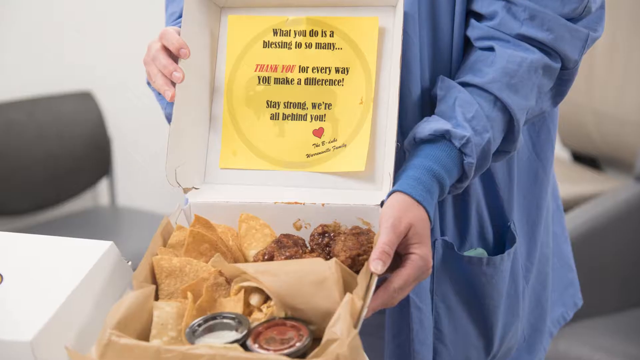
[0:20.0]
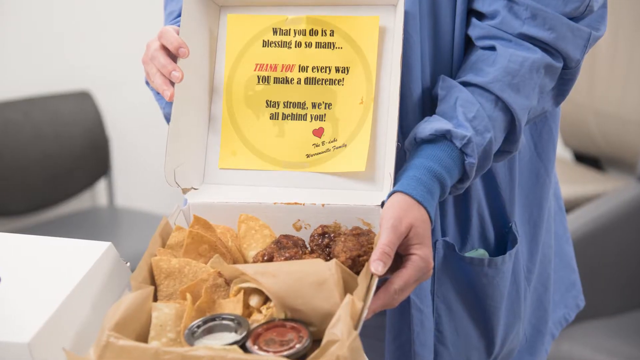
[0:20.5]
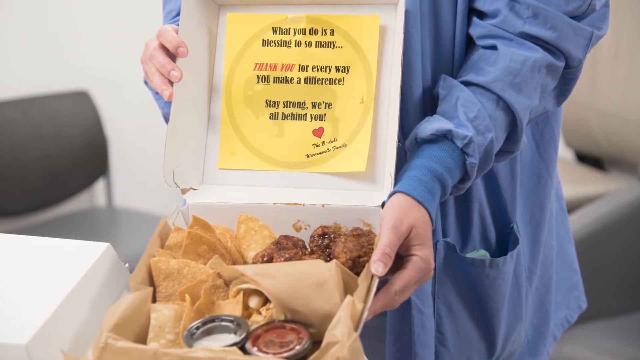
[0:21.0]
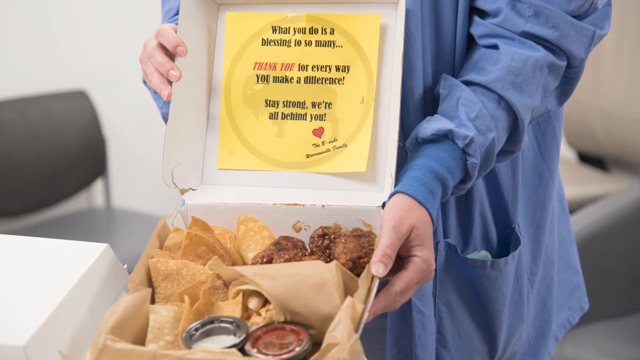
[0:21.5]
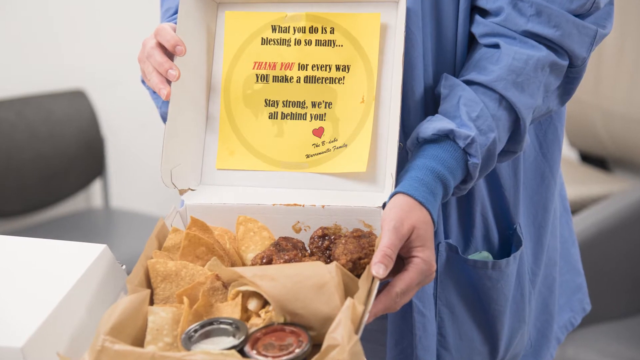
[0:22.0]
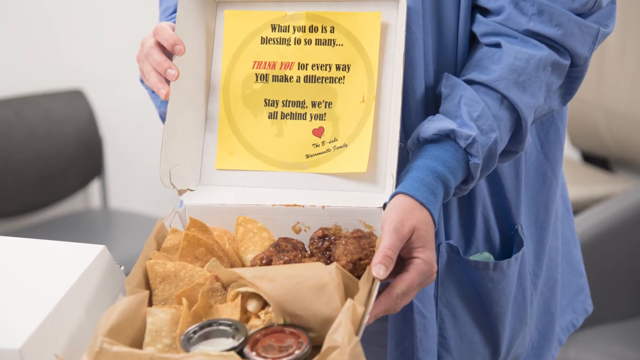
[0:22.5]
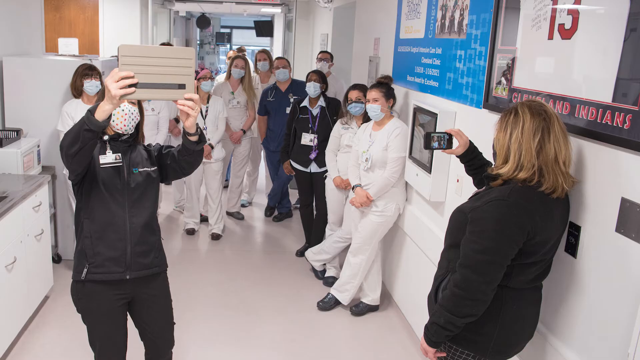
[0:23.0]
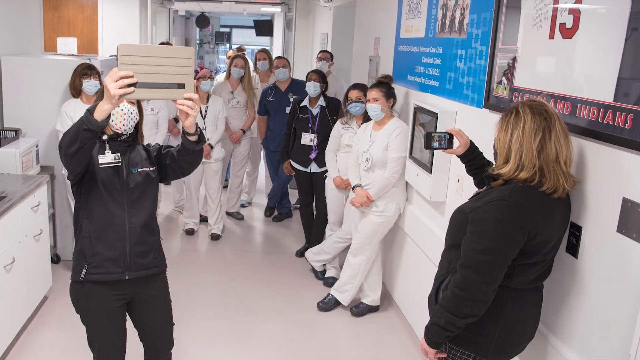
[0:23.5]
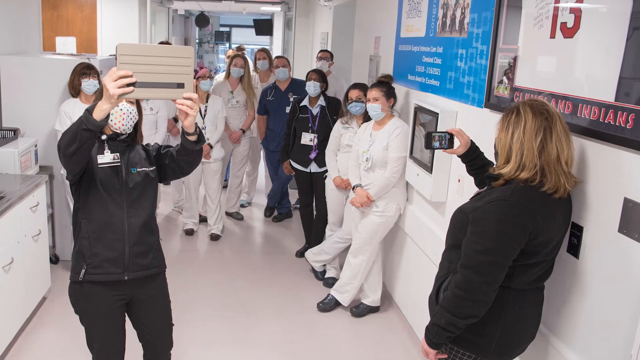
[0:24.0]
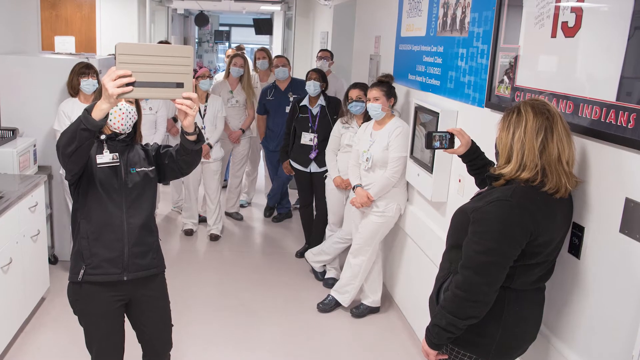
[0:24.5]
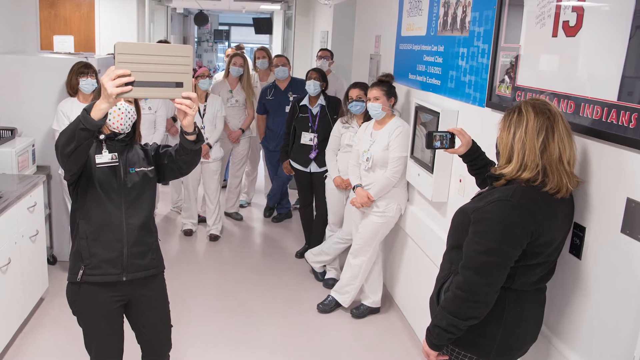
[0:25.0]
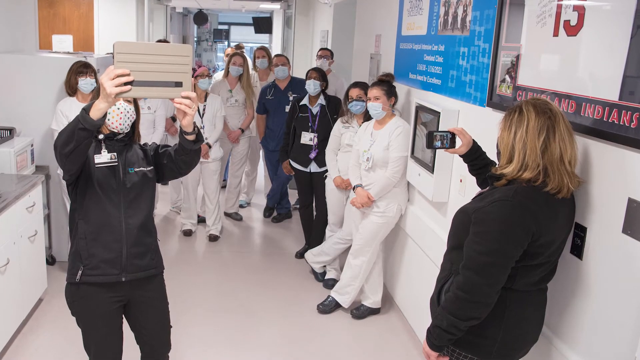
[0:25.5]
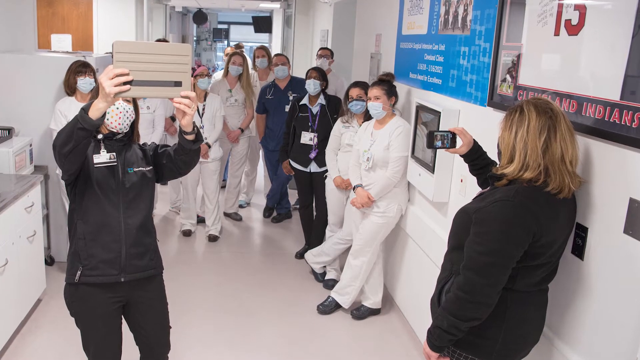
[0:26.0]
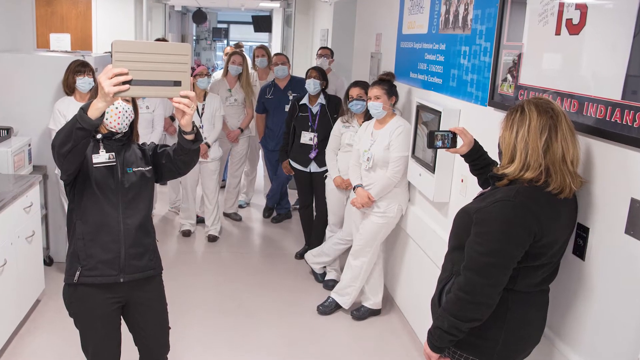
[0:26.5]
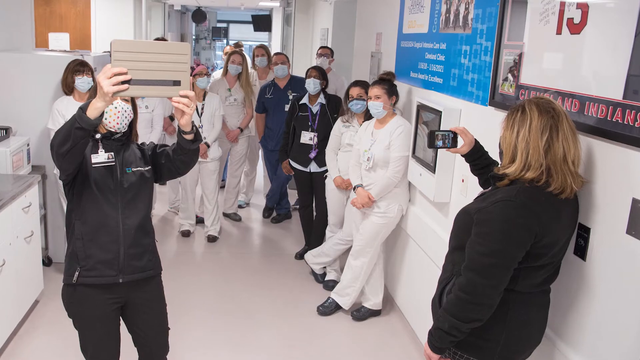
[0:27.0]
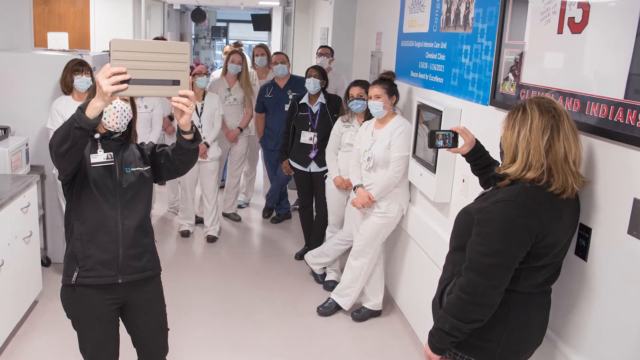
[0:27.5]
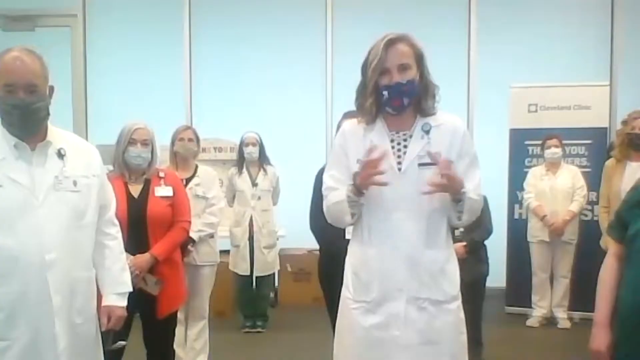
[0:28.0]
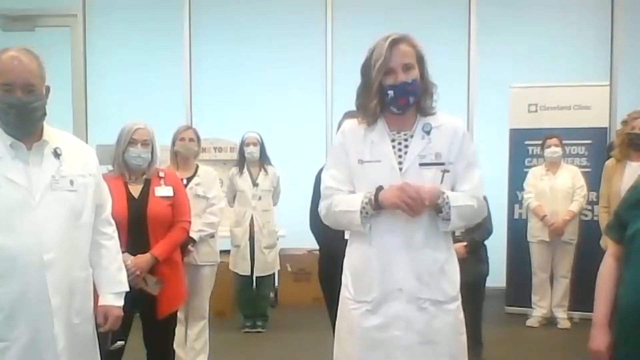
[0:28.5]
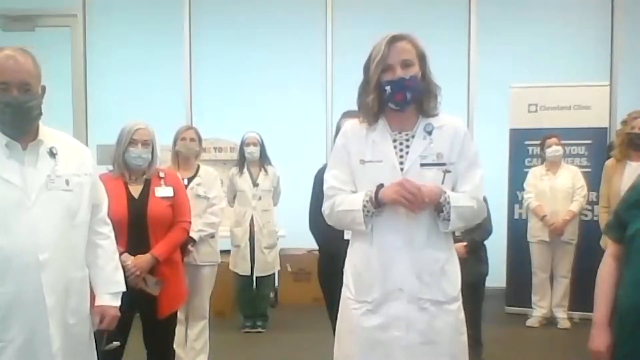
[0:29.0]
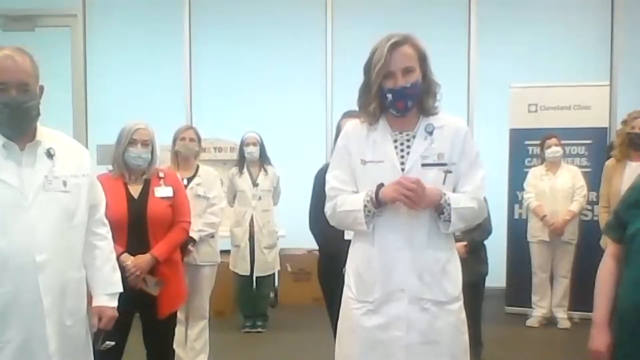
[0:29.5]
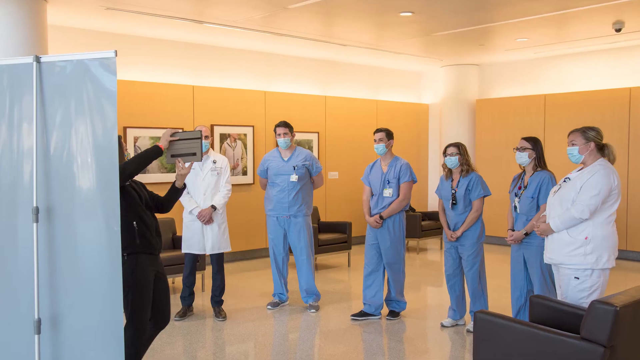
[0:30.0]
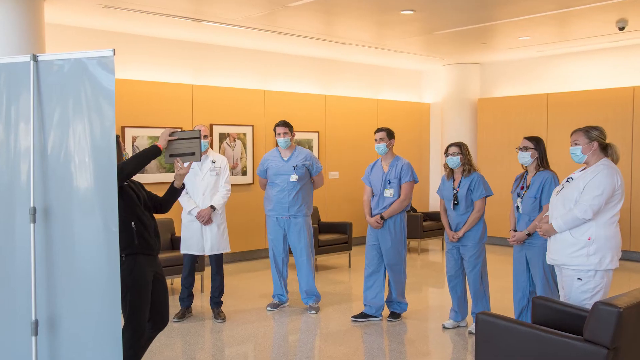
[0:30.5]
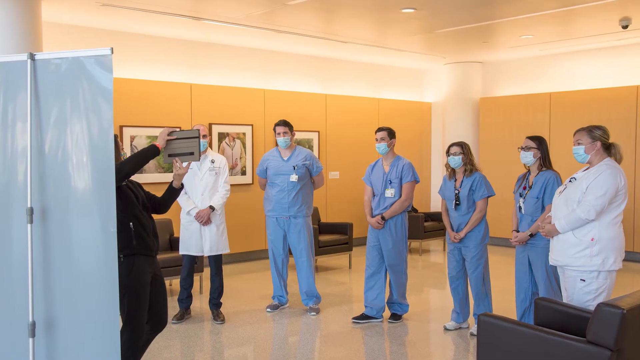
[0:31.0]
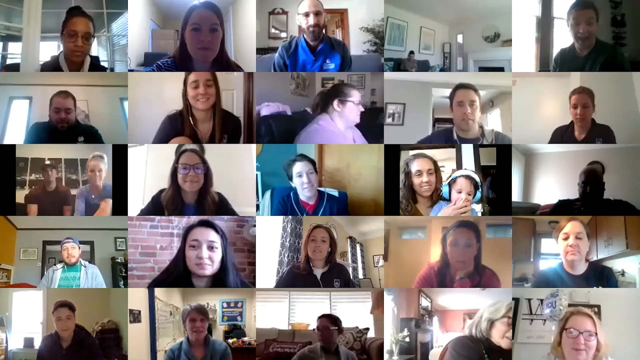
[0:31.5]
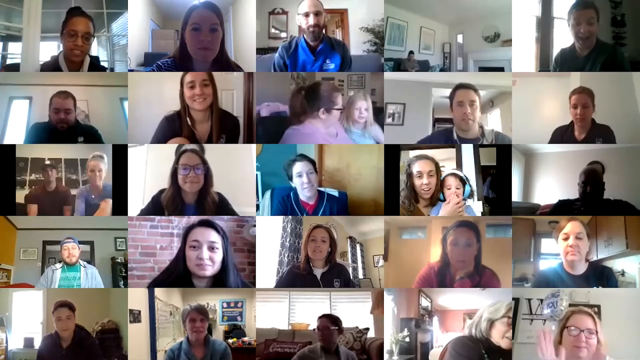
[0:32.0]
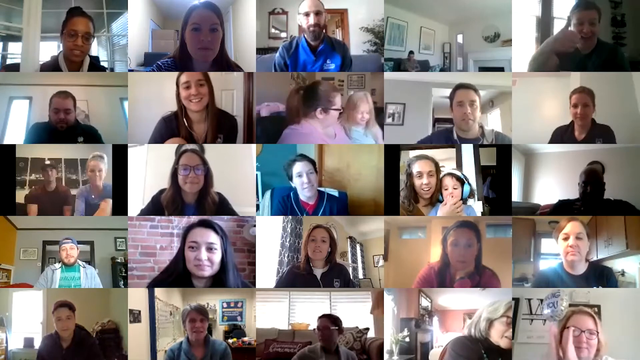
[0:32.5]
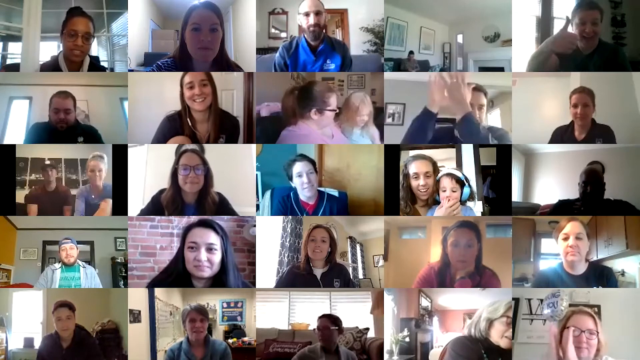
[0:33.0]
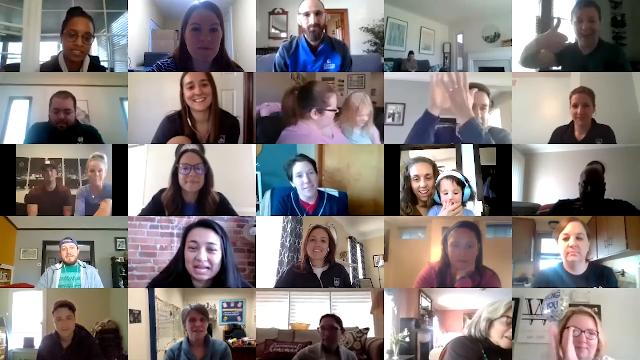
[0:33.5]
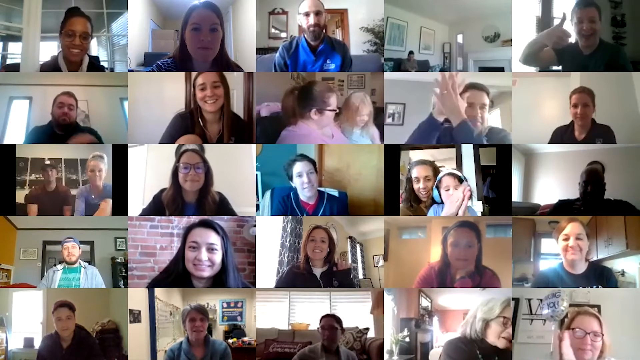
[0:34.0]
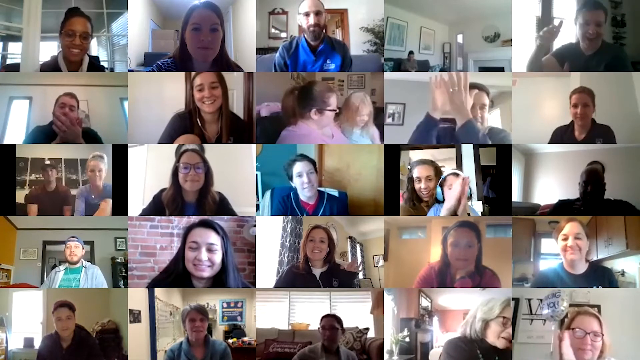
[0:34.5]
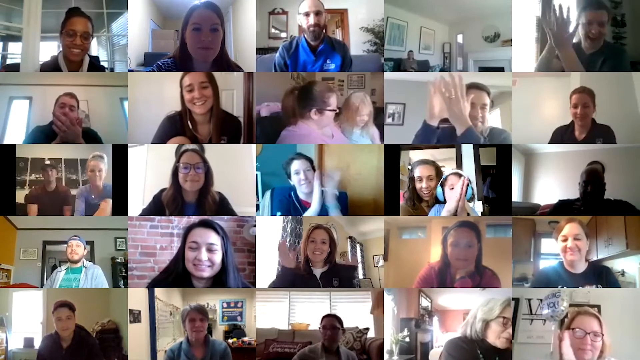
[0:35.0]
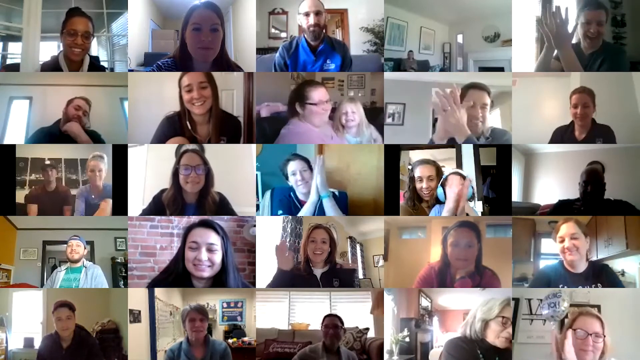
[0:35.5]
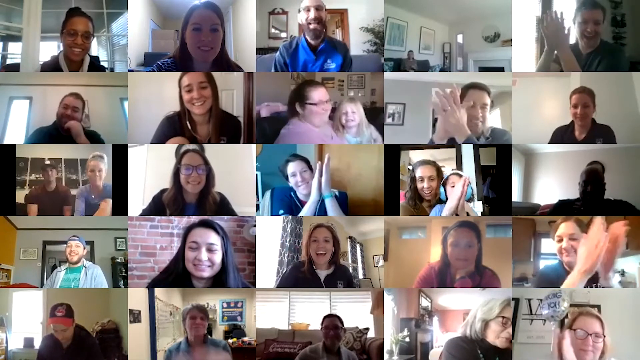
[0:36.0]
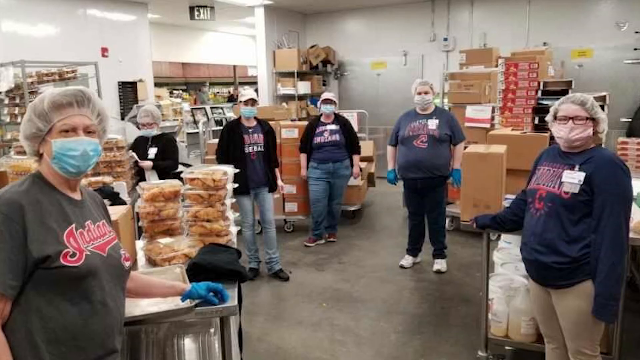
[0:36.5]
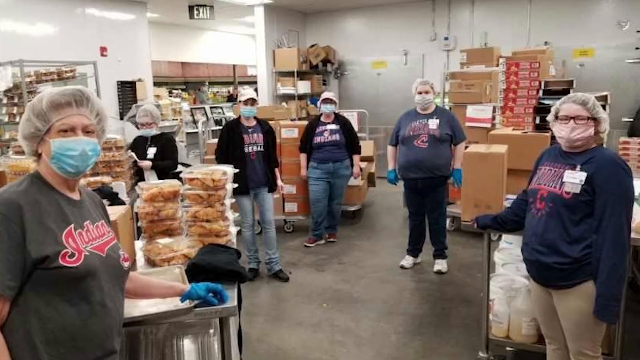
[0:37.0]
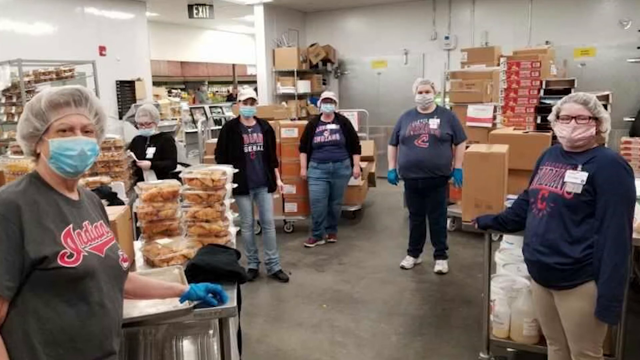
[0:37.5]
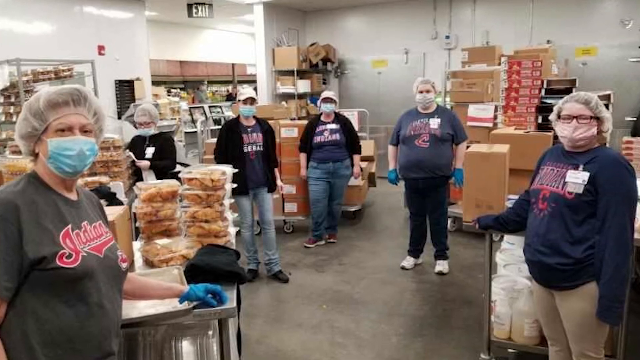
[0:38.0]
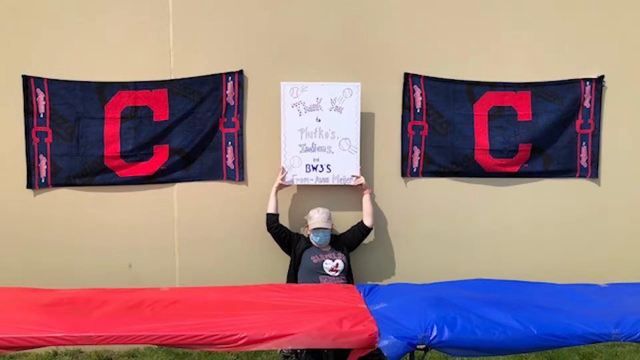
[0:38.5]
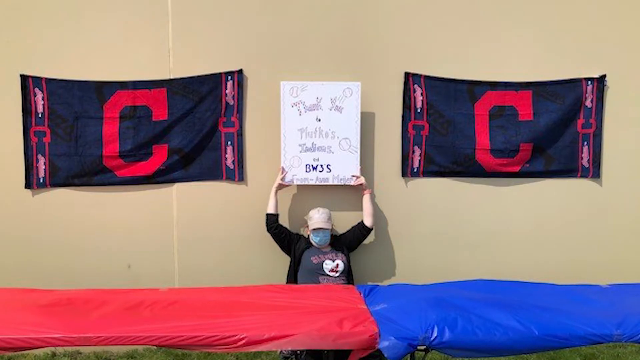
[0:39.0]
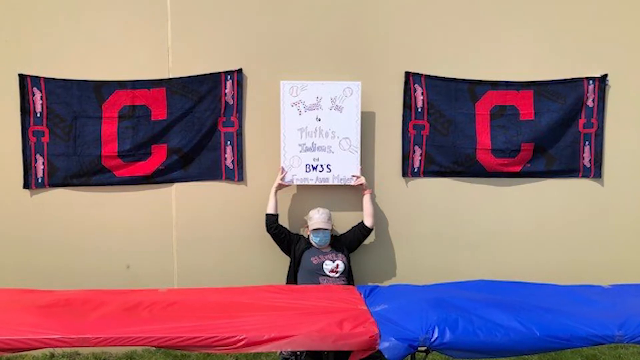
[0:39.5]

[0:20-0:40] A takeout box holds food such as chips, what looks like chicken wings, and dipping sauces. Inside the box is a yellow piece of paper that reads "what you do is a blessing to so many. Thank you for every way you make a difference. Stay strong. We're all behind you." The person holding it appears to be a doctor or nurse in blue scrubs. Next comes a picture of doctors and nurses in a hospital, apparently taking selfies, all wearing face masks; some wear black scrubs, some white, and some blue. Several different pictures of these doctors and nurses are shown. The video then shows what looks like a Zoom call, with a grid of people talking to one another. It then cuts to a group of people standing in a factory, wearing hairnets and masks, with "Indiana" on their shirts and food and bins behind them.